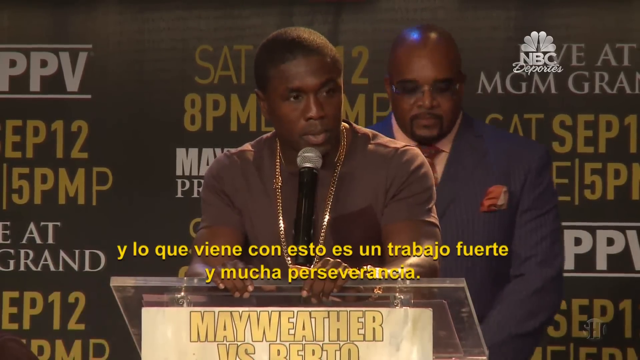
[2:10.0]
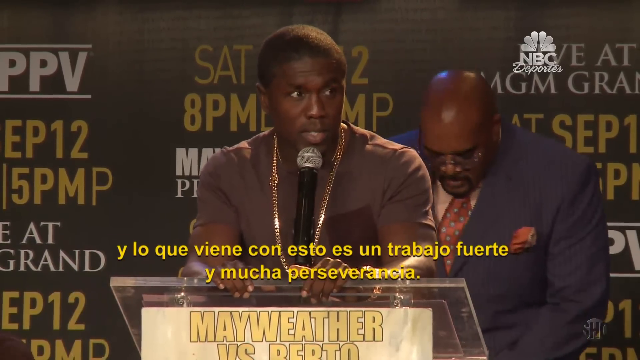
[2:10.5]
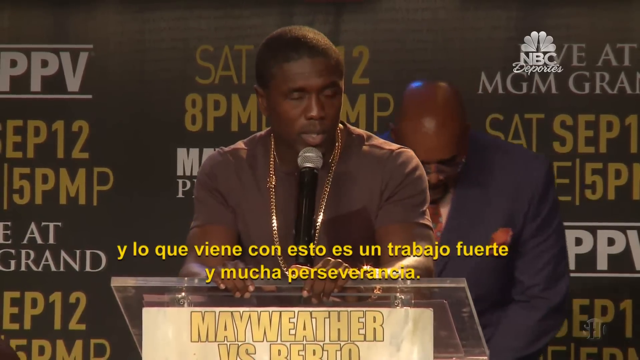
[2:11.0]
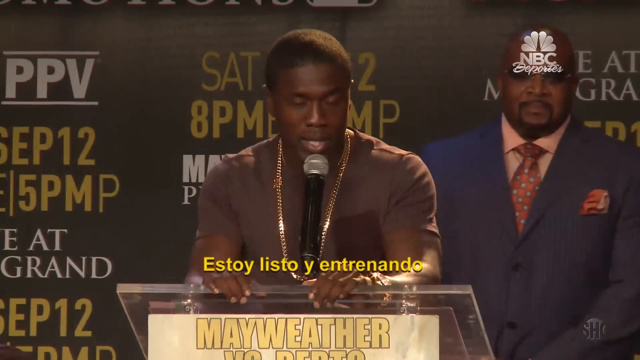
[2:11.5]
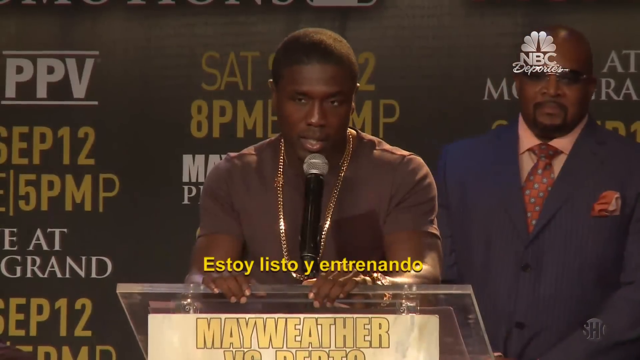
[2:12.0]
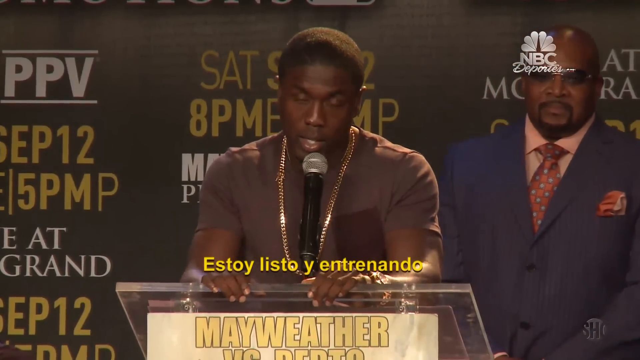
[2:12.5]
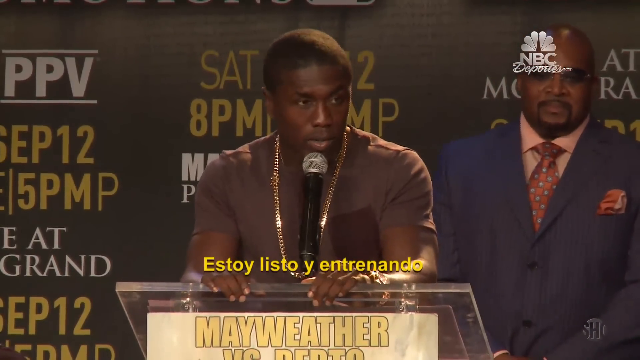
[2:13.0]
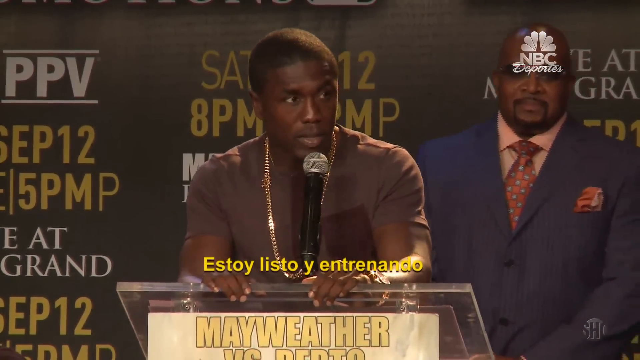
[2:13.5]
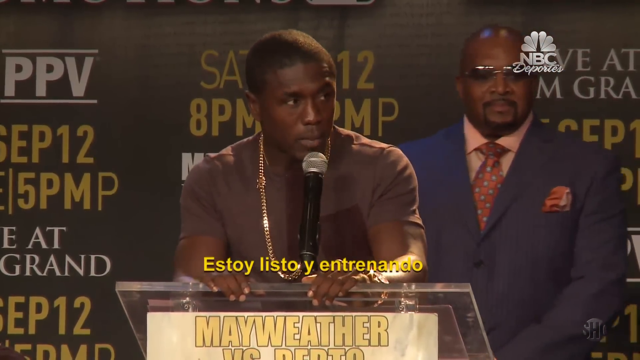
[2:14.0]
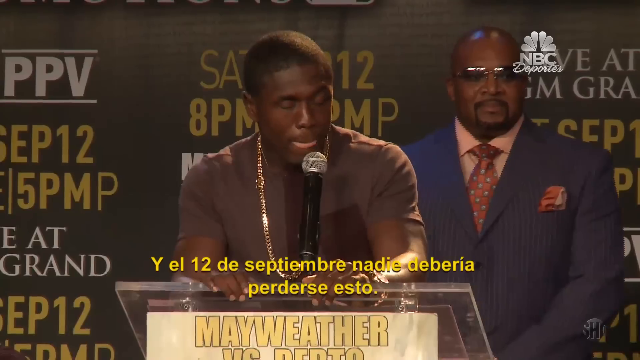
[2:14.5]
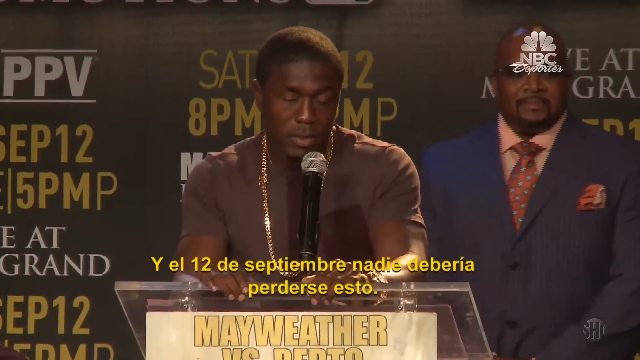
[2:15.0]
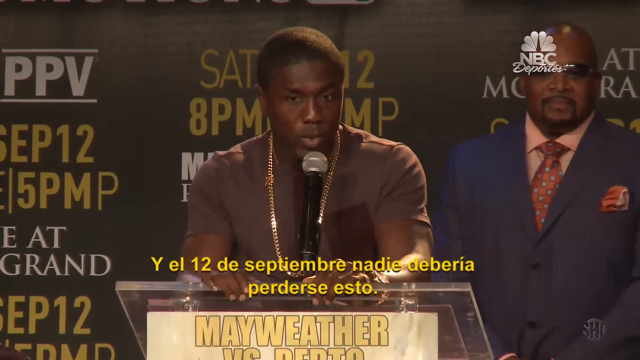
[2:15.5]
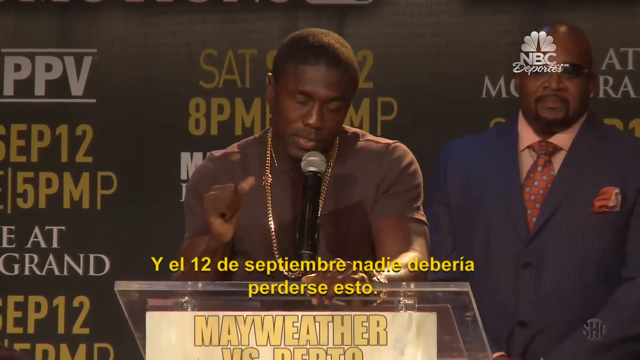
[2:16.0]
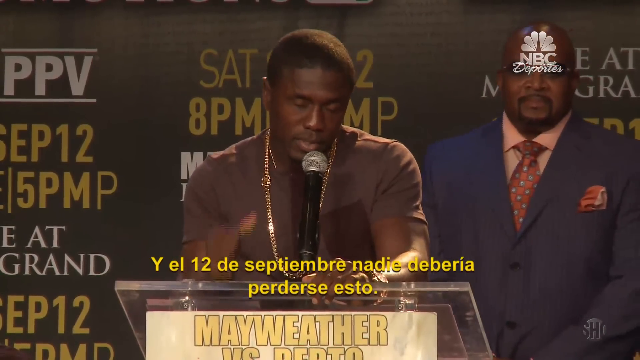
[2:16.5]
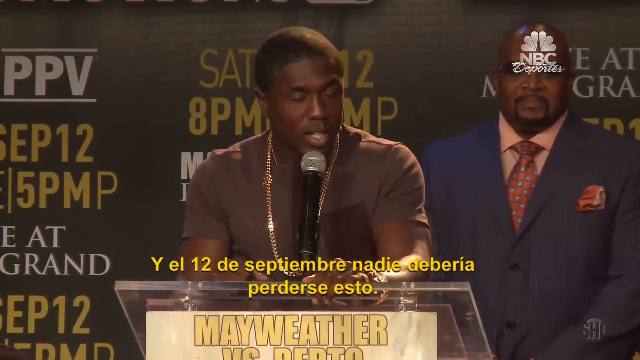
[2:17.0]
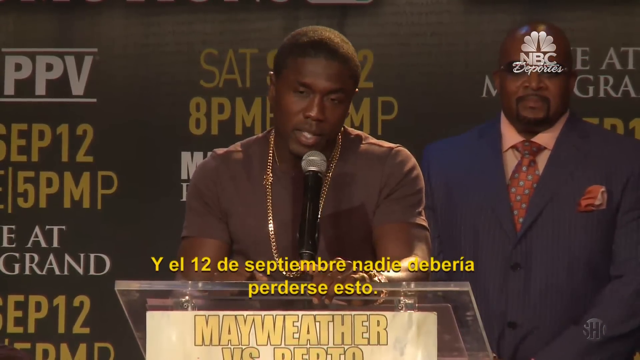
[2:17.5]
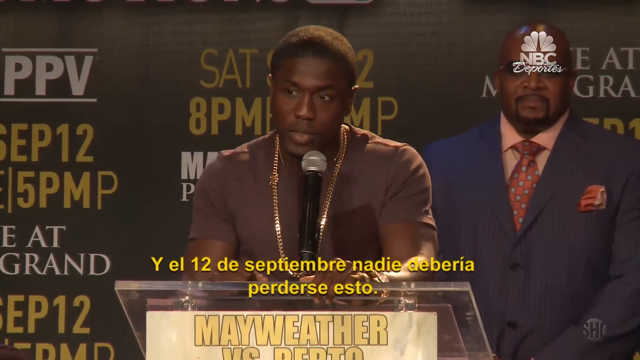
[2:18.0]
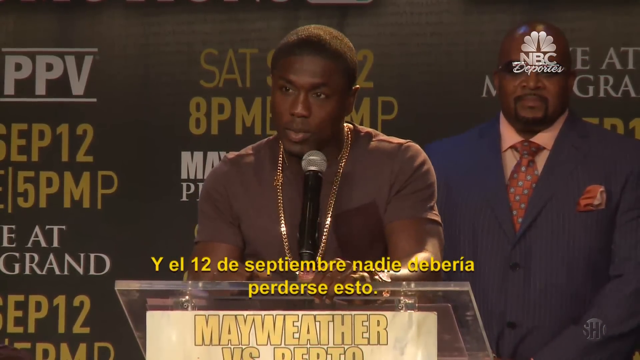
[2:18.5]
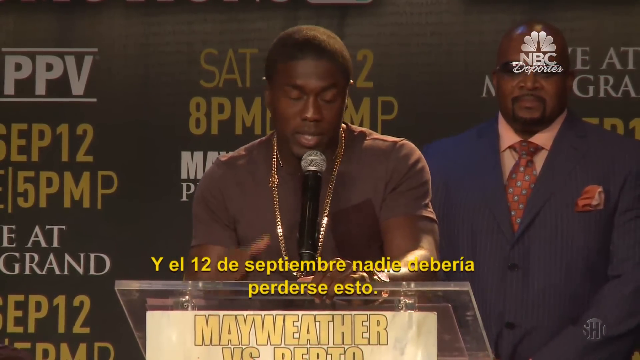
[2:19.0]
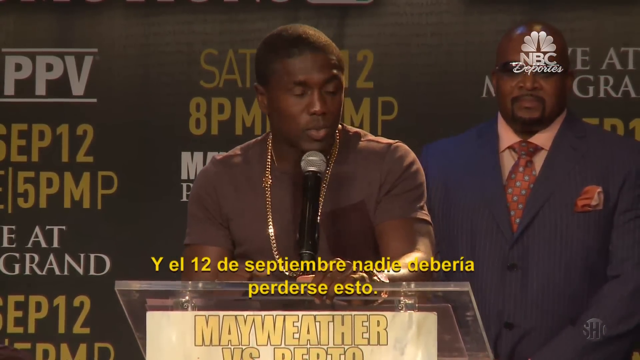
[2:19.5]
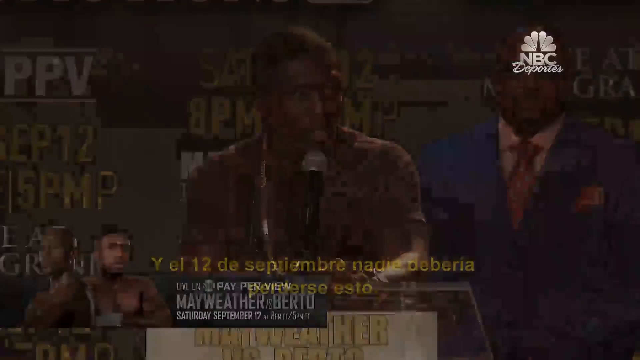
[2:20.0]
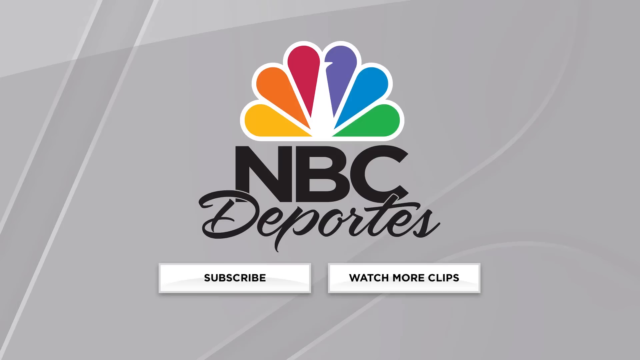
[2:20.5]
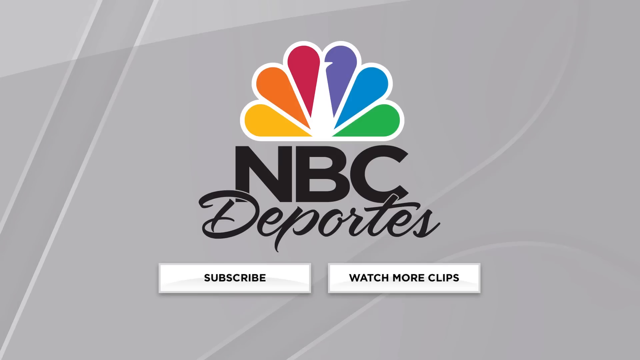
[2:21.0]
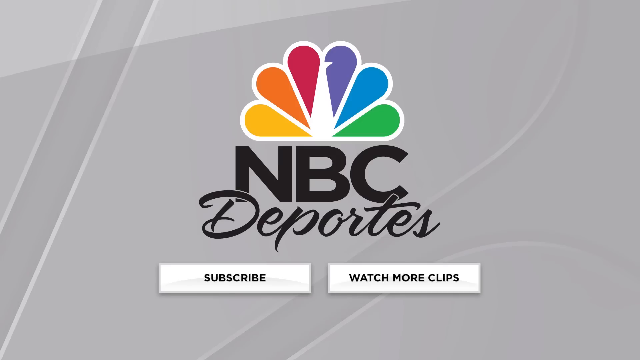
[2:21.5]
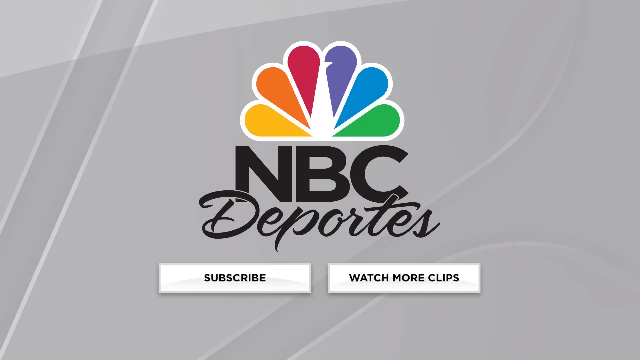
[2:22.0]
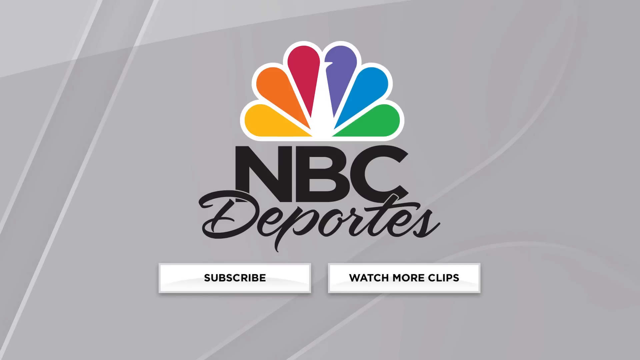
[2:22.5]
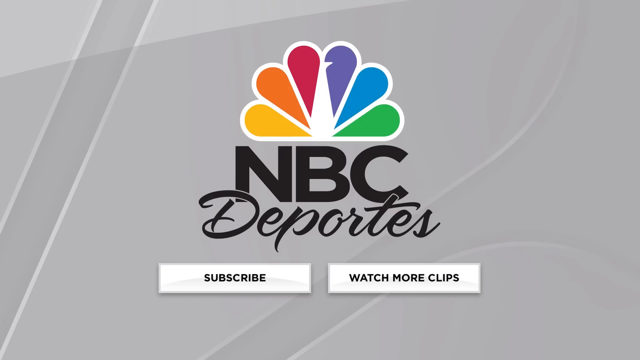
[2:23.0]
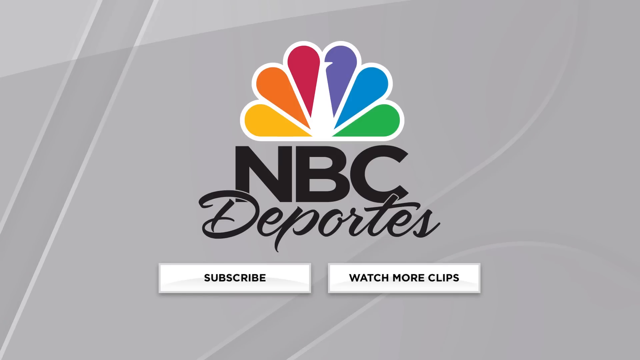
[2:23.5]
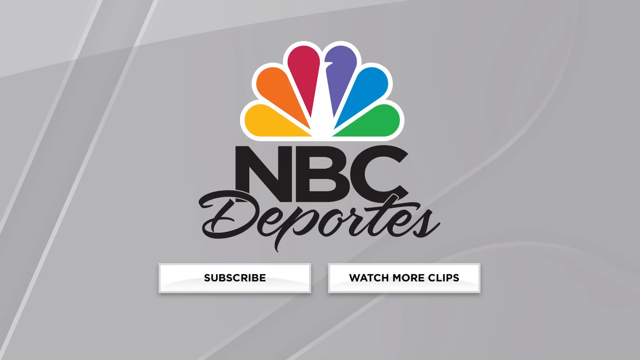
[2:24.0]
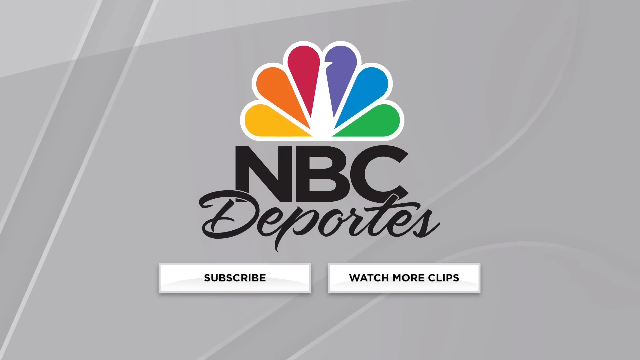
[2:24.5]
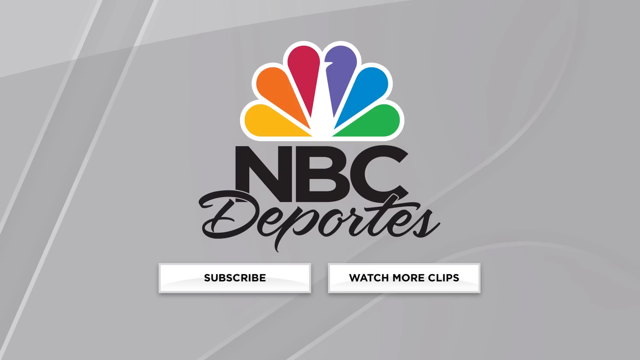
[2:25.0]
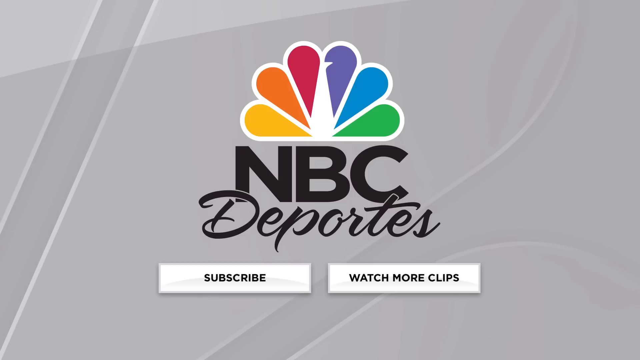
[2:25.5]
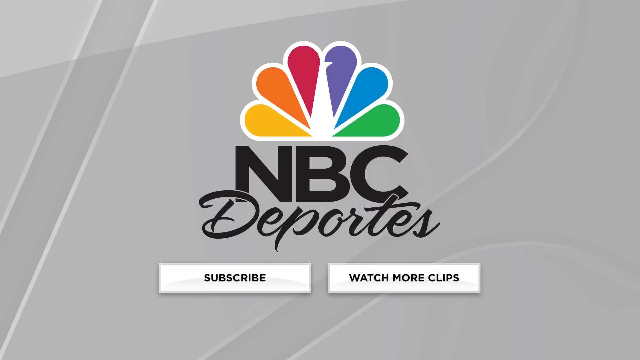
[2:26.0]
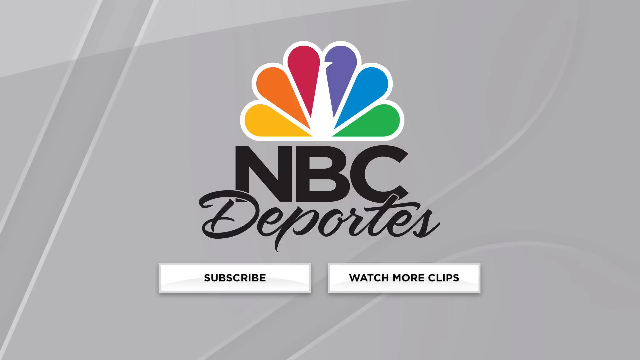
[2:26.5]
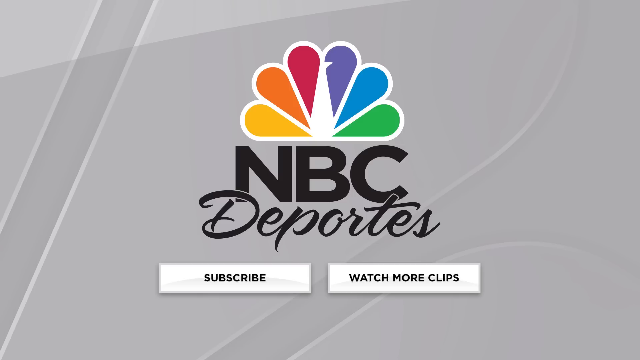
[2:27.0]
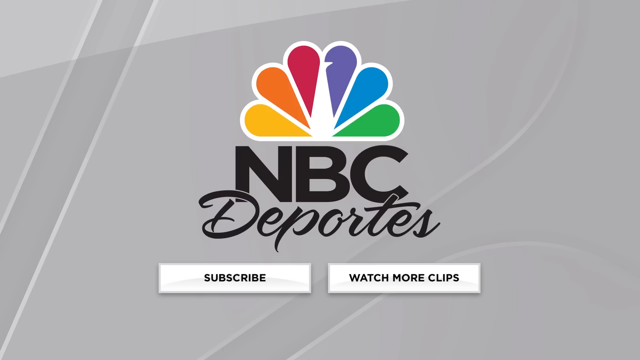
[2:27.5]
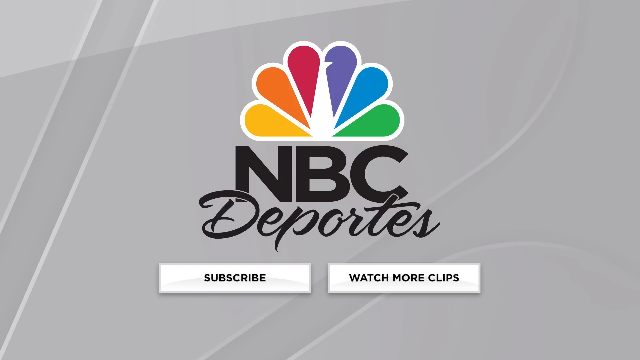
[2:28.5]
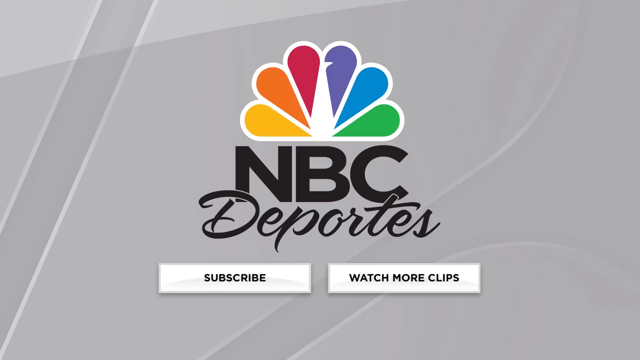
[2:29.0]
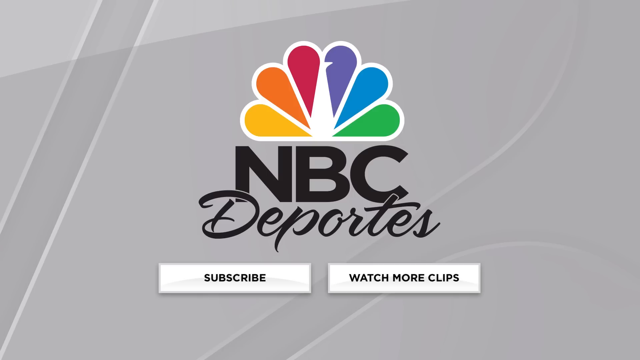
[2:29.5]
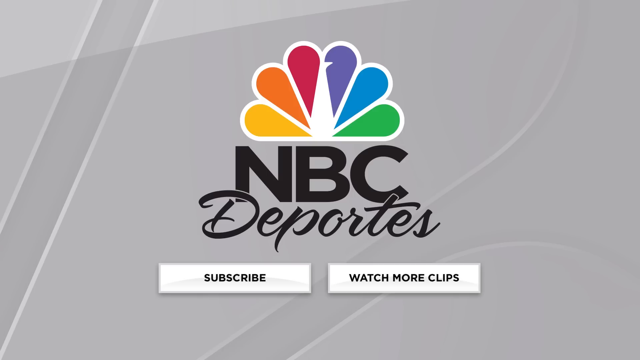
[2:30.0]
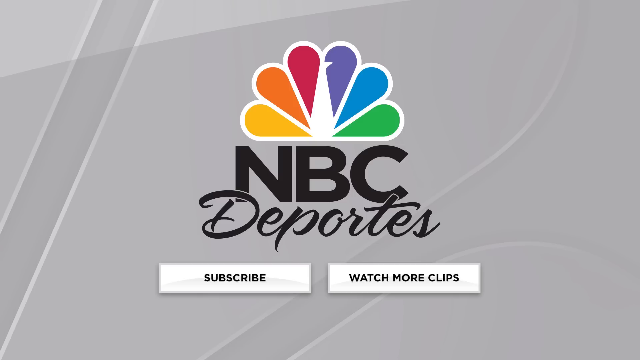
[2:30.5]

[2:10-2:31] A man speaks at a podium with a microphone on top. He looks to his left-hand side, holding the top front of the podium with his right and left hands. At one point he gestures with his right hand, making a fist and pounding lightly on the podium, and he seems to close his eyes a little as he does so. As he speaks, his head kind of sways, mostly his chin moving left to right. He moves his eyes to the right side, then closes his eyes slightly again as he speaks. Toward the end, a still-picture overlay appears showing the NBC logo with the peacock.